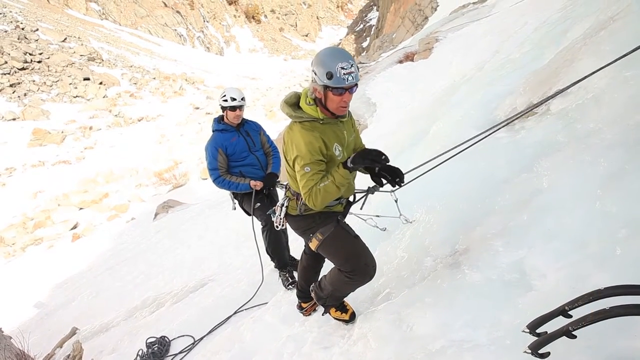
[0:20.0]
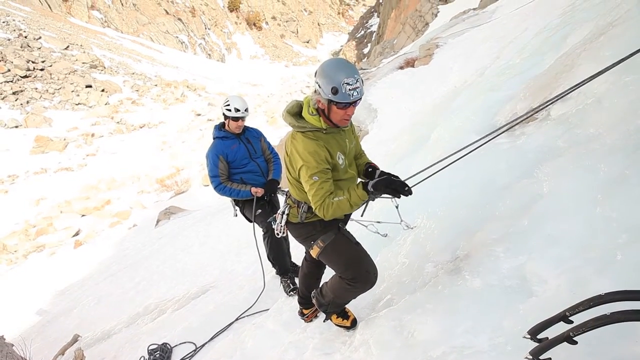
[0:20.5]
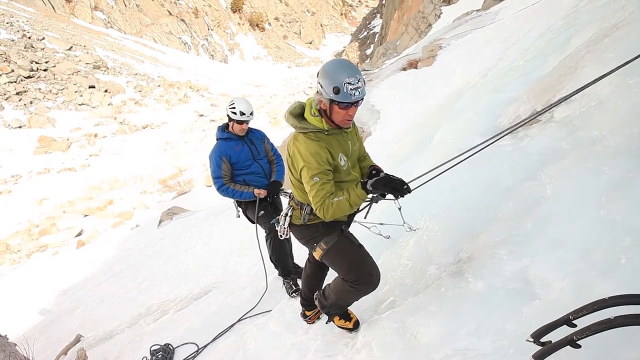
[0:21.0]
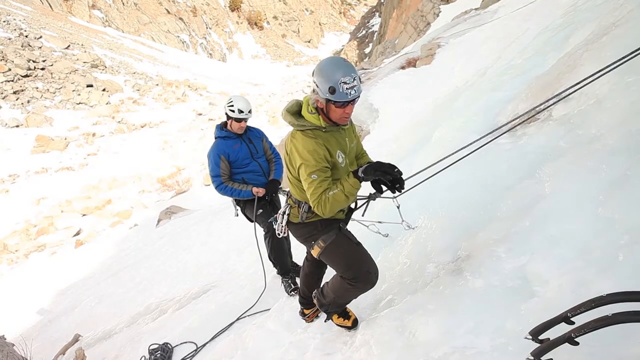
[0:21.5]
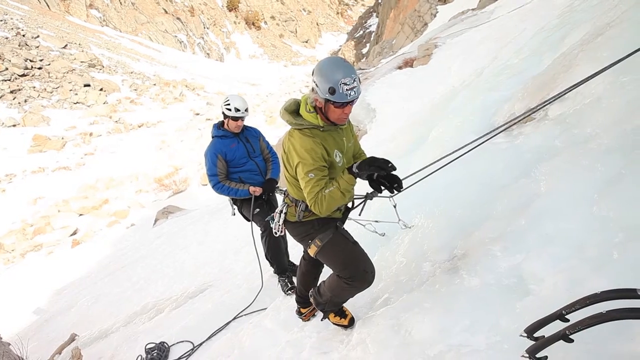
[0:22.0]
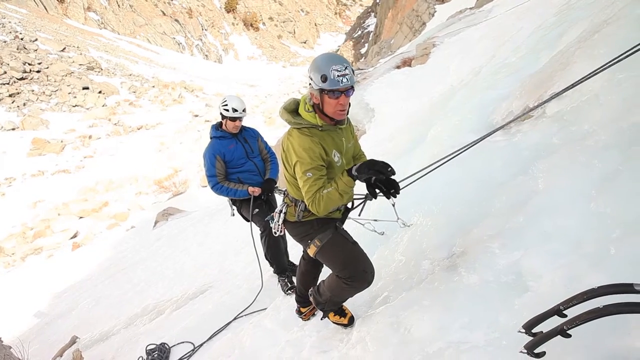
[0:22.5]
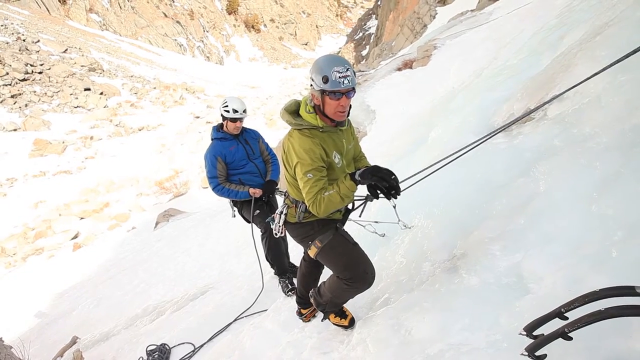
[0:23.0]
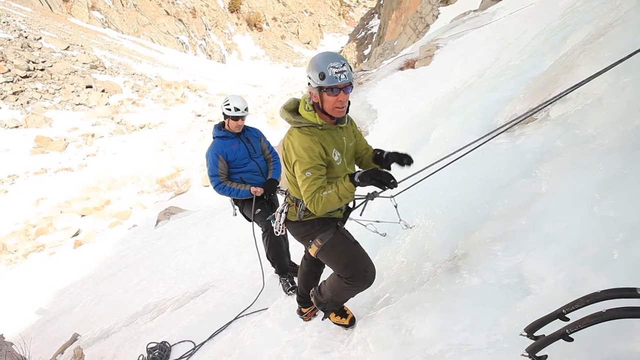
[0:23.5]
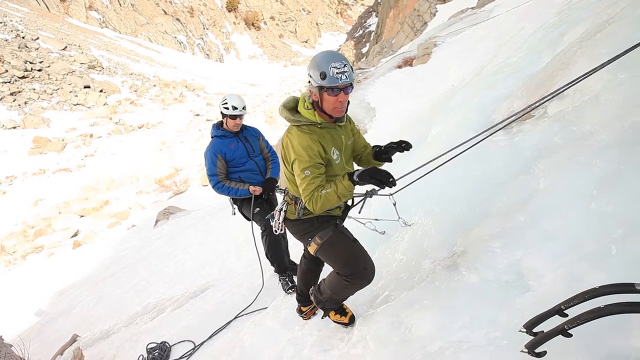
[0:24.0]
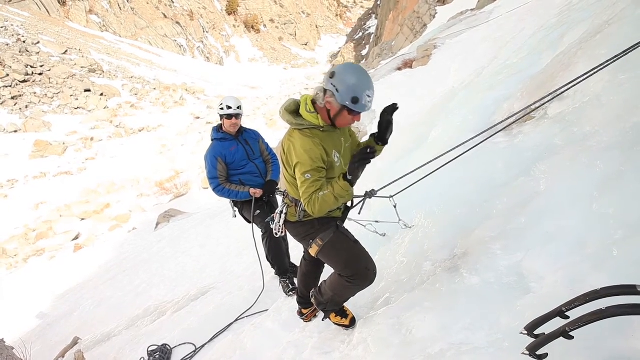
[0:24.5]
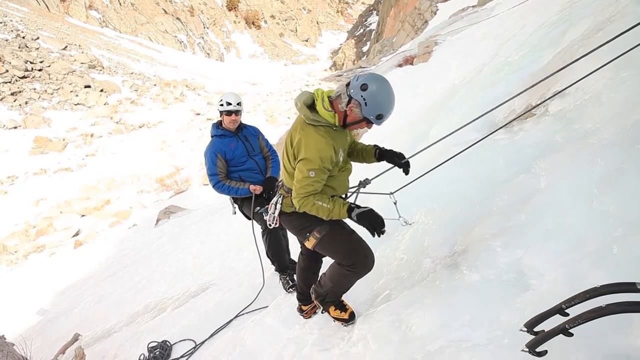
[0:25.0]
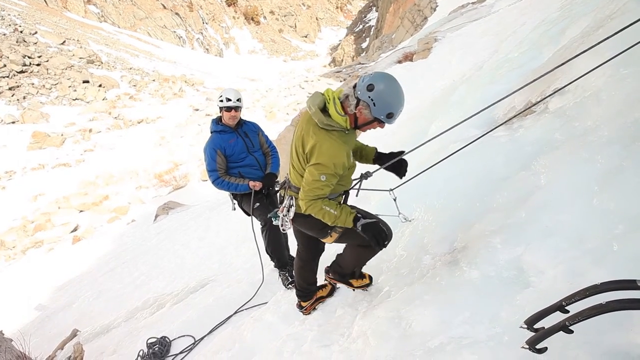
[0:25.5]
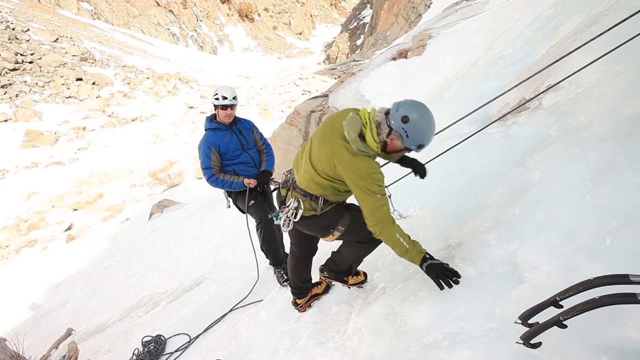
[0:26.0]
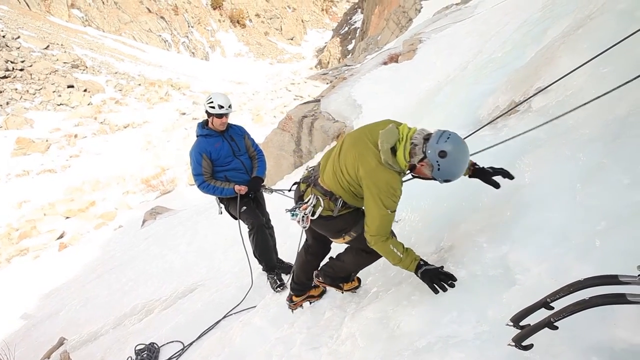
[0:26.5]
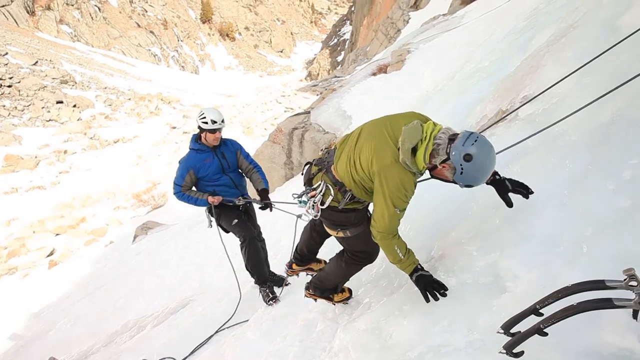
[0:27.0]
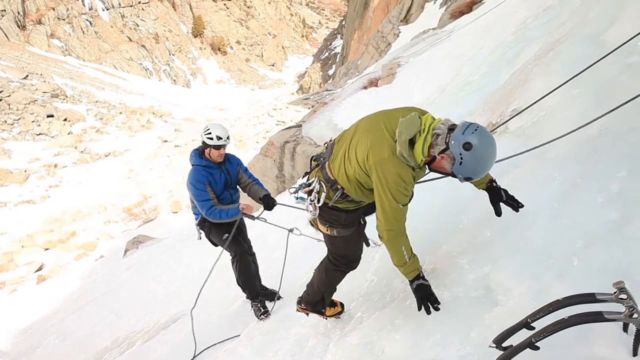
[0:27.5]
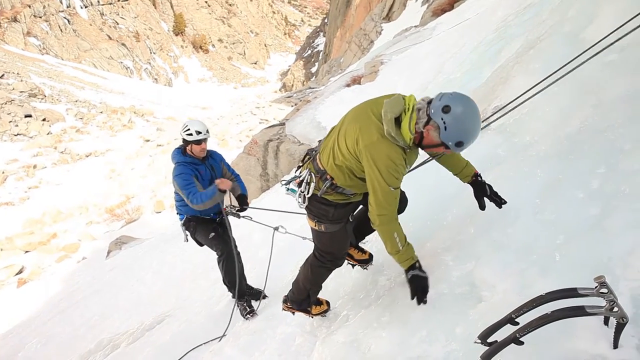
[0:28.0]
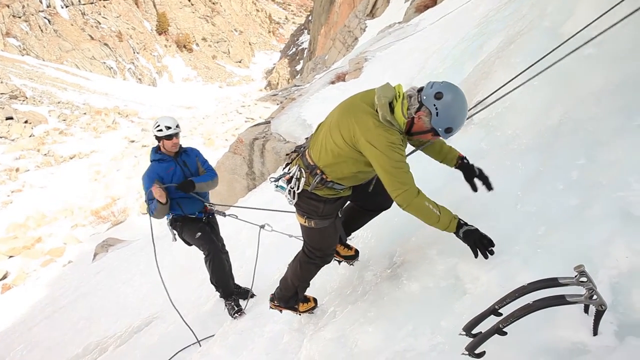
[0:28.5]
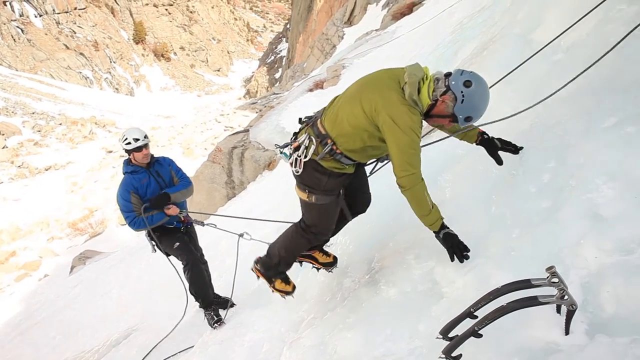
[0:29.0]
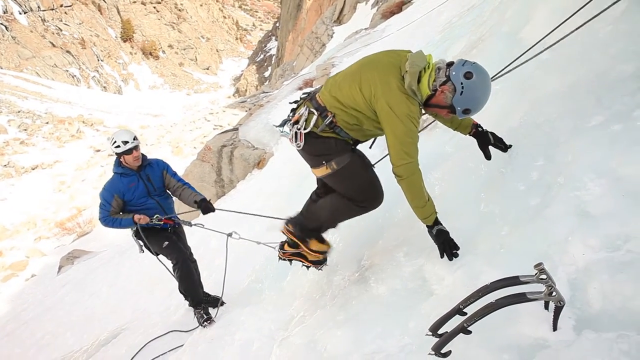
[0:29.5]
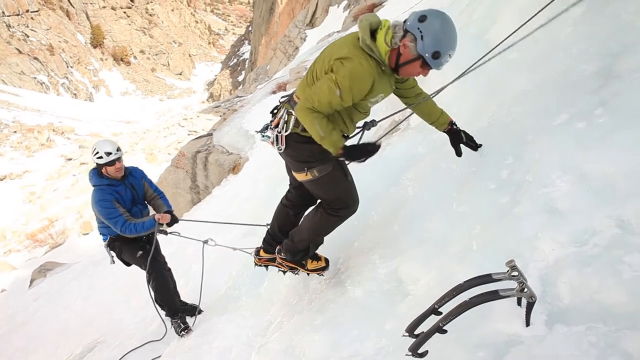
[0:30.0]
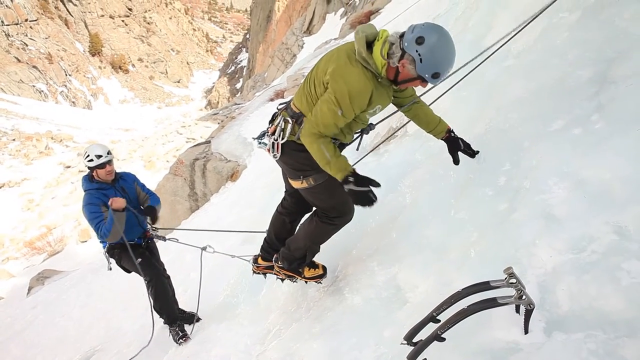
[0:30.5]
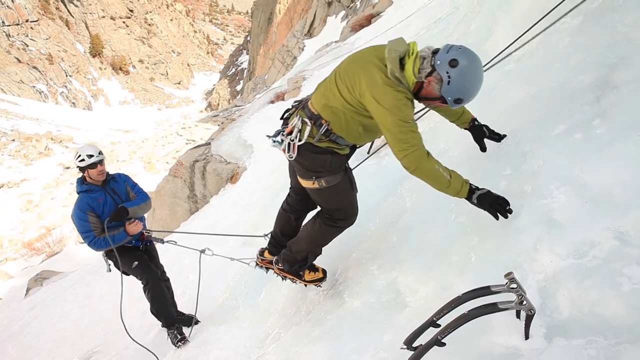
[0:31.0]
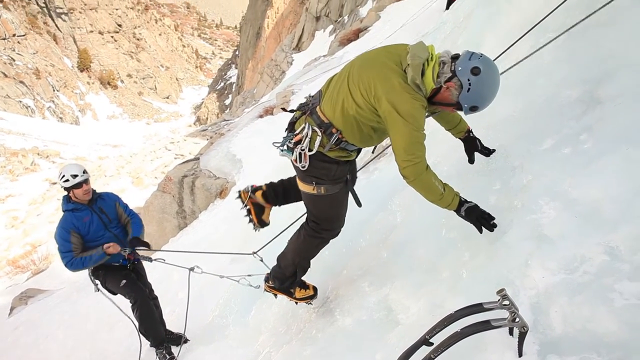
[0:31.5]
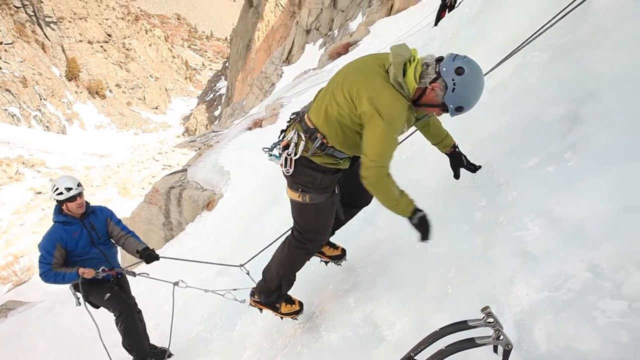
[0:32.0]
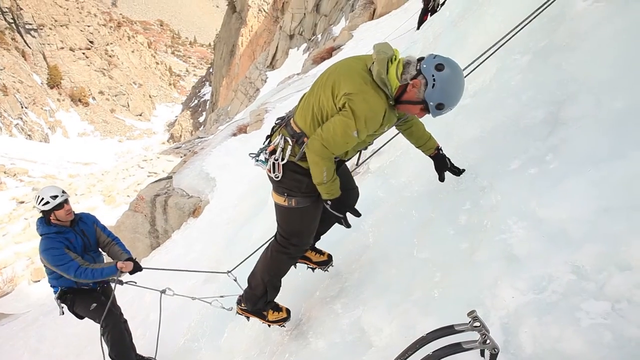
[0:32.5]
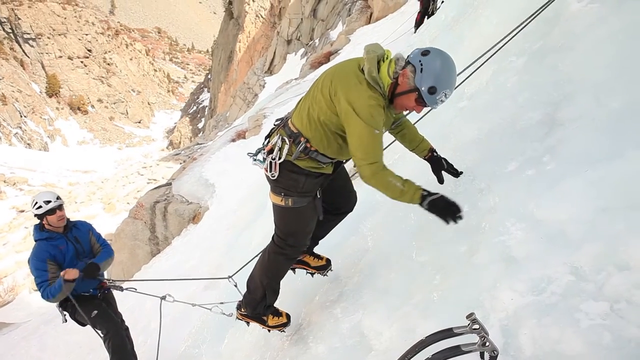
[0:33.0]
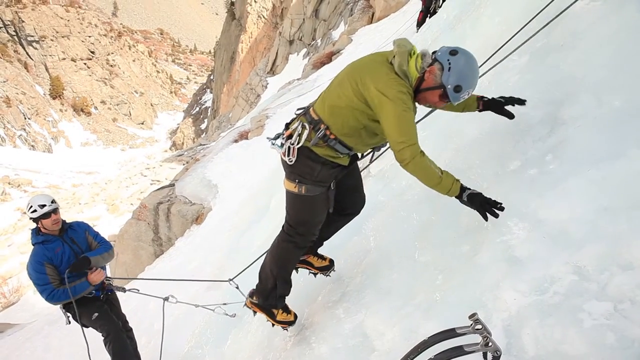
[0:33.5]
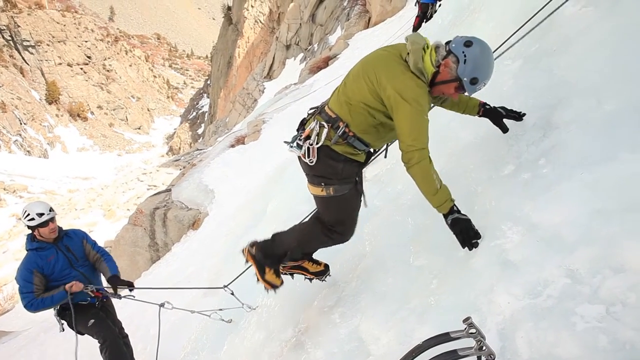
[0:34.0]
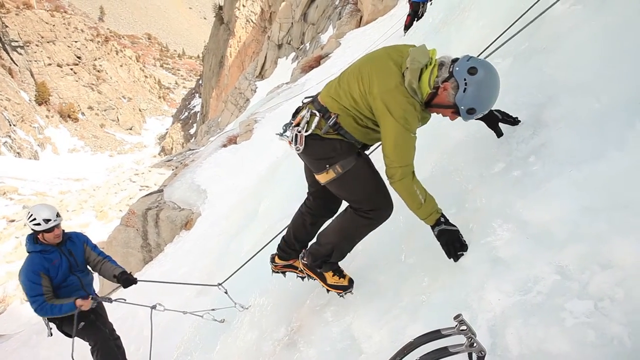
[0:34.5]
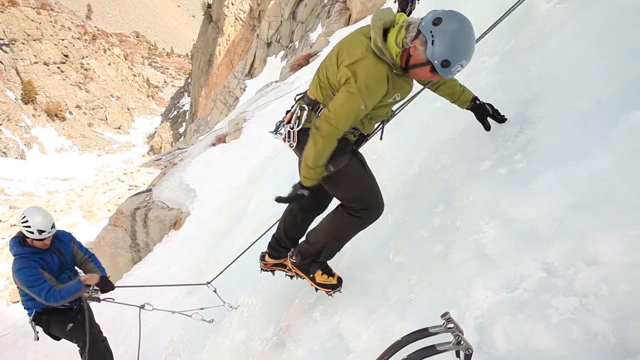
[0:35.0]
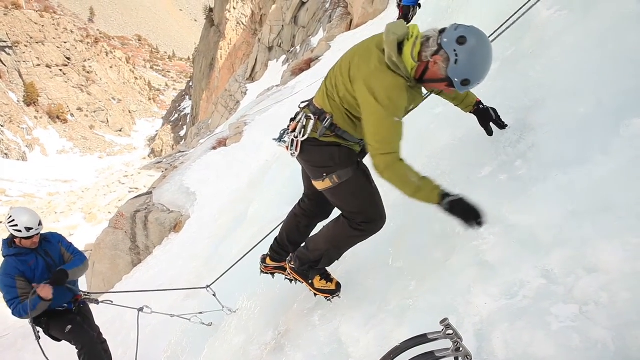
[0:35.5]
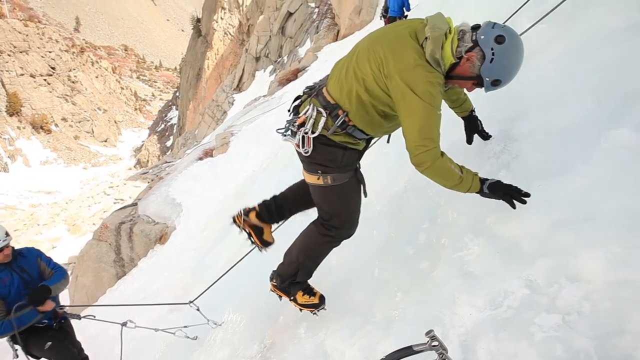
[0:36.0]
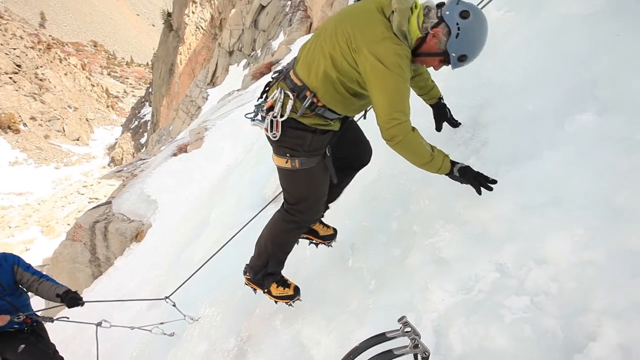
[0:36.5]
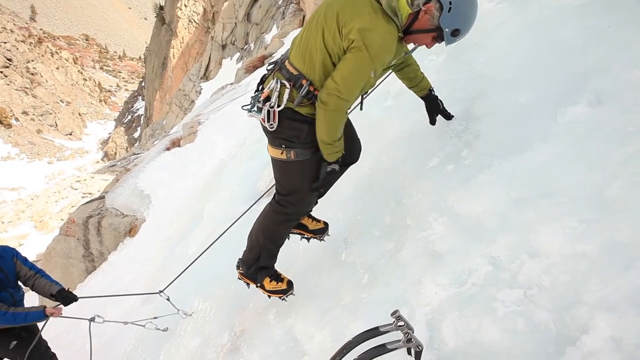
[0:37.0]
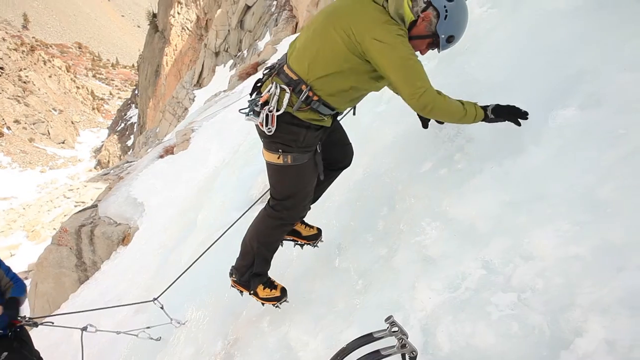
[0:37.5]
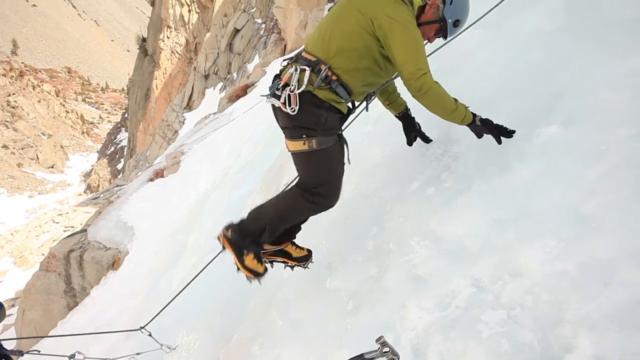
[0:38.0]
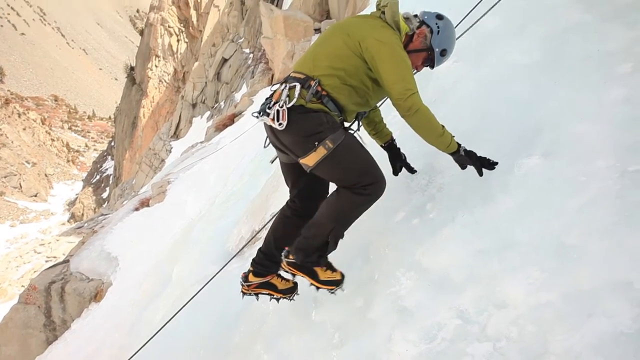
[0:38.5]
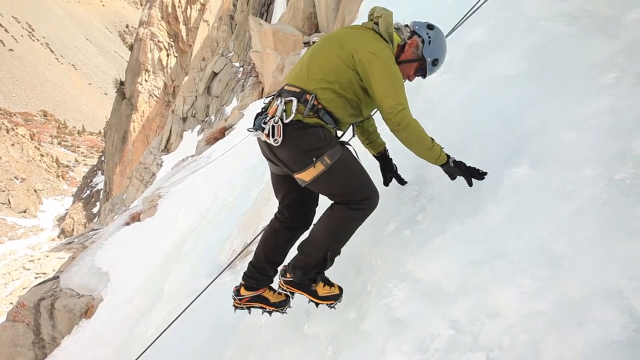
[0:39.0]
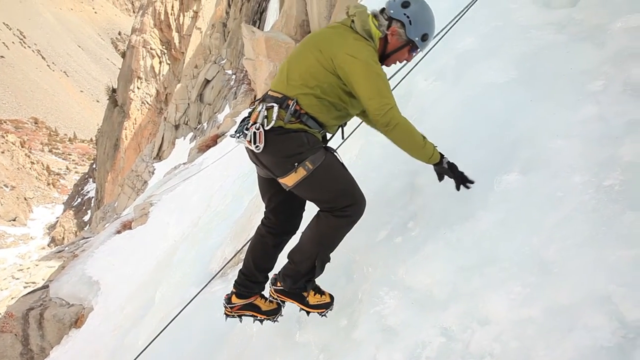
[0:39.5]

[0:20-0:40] Two men stand on the side of a very steep mountain incline, apparently in snow. They wear some type of snow shoes with spikes on the bottom. The man in the green jacket seems to be leaning forward, but he is actually standing straight up on the steep slope. He has one toe dug into the side of the hill, with that knee slightly bent and his other leg straight behind him. Eventually he smashes the toe of his bent right leg into the ice, pushing the spikes of his boots into it, and then smashes his left toe into the ice. He uses the toes of the ice spikes to walk up the mountain, moving one leg up and then the other, and as he sets each toe onto the snowy or icy slope he kind of kicks the ice to dig the toe in for secure footing.